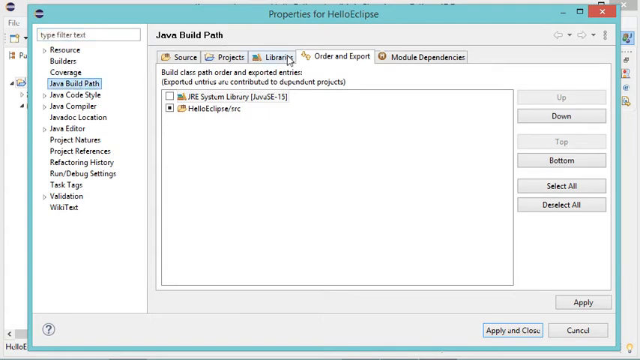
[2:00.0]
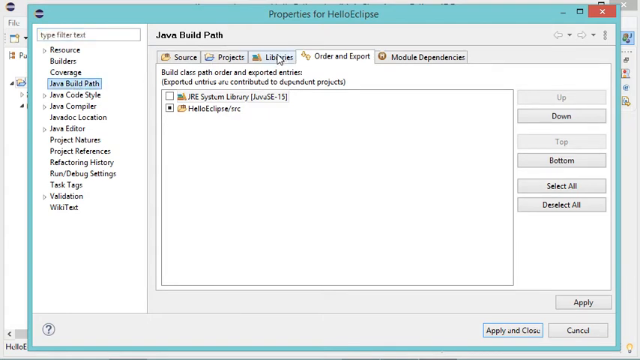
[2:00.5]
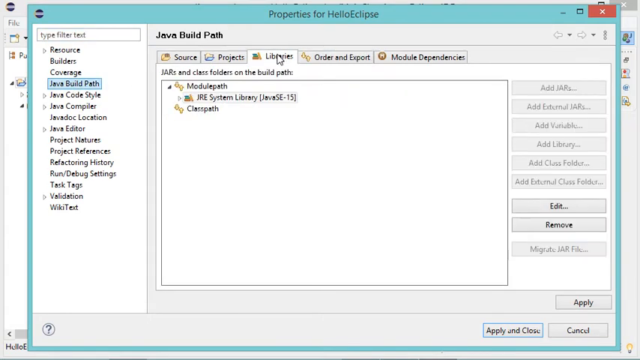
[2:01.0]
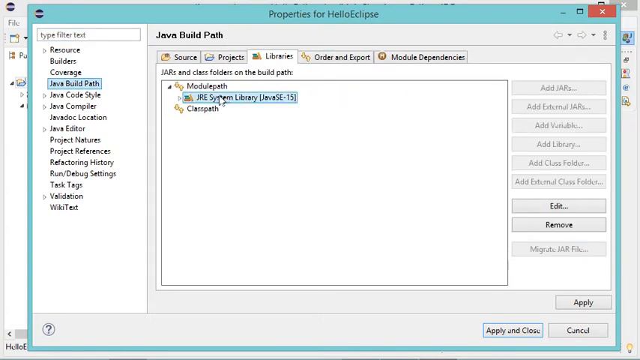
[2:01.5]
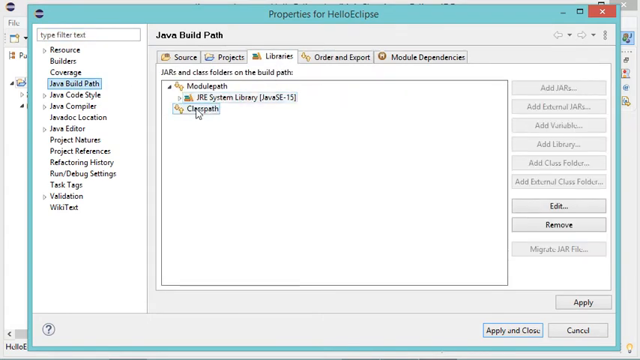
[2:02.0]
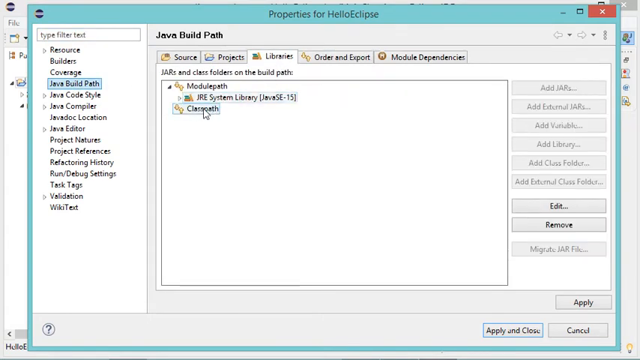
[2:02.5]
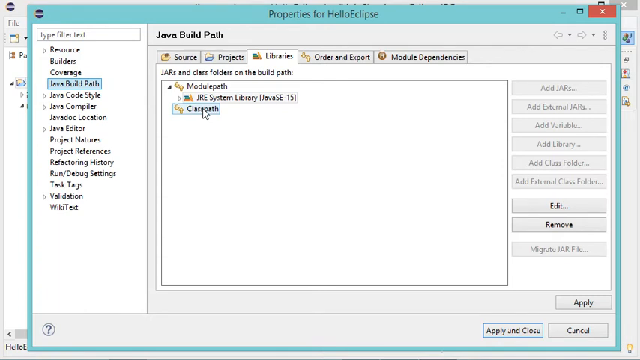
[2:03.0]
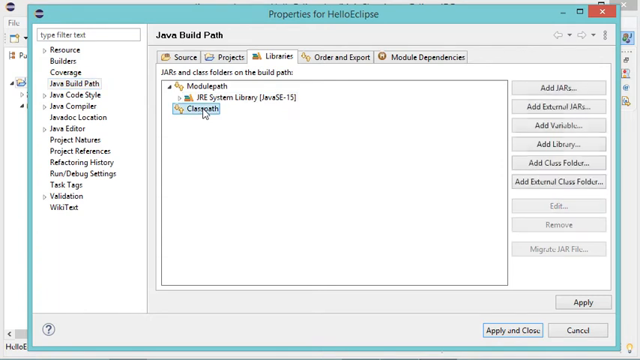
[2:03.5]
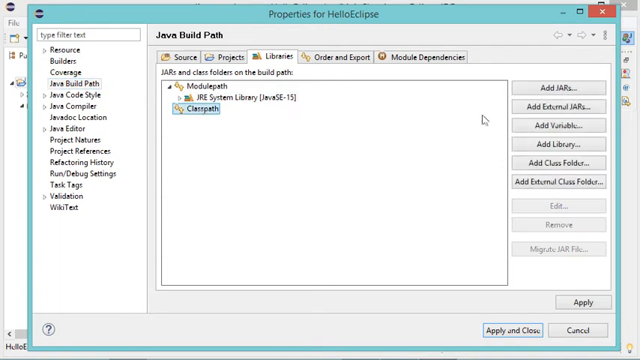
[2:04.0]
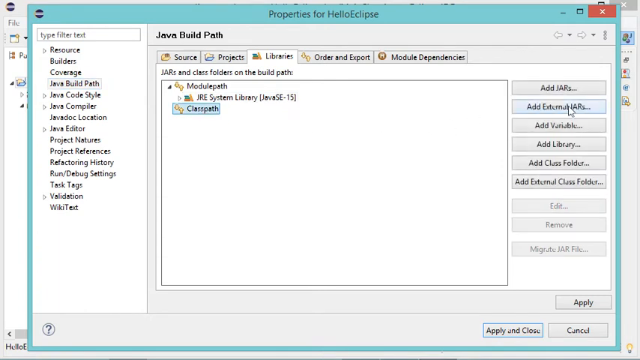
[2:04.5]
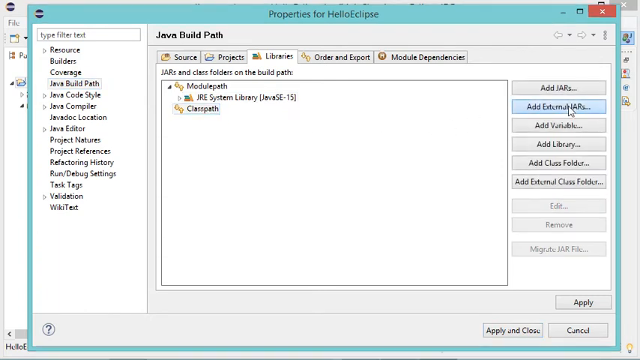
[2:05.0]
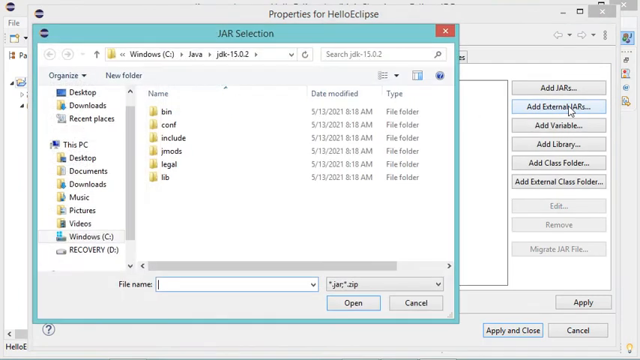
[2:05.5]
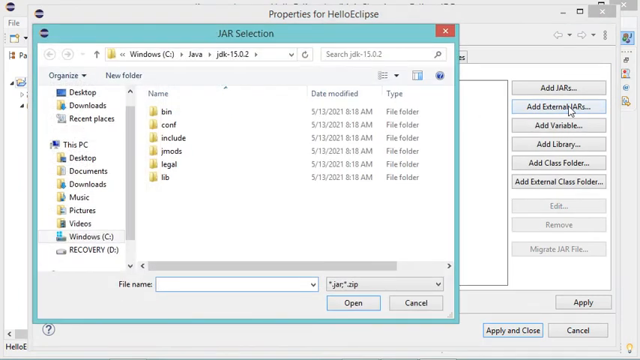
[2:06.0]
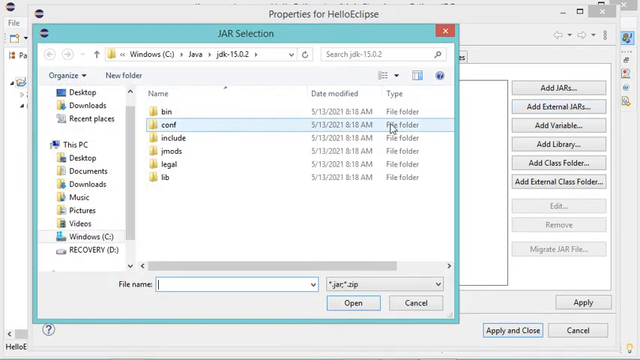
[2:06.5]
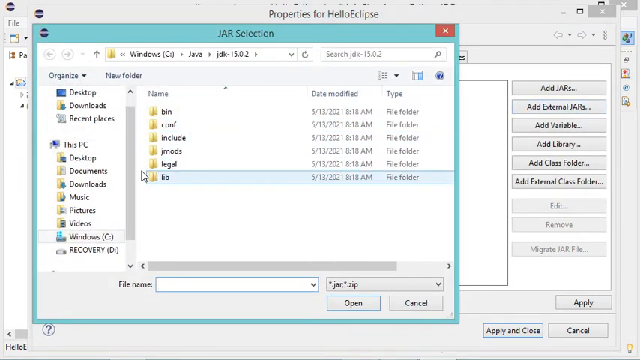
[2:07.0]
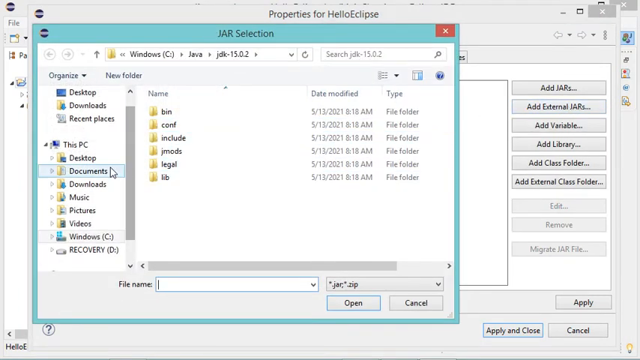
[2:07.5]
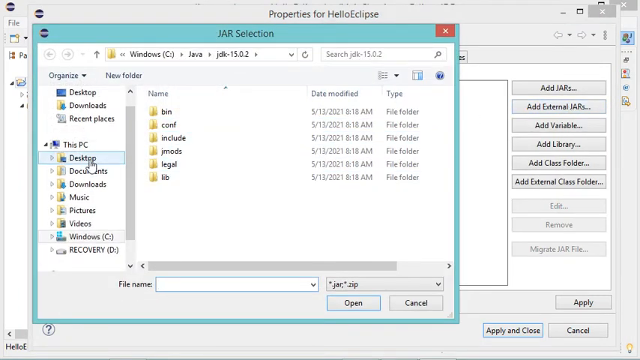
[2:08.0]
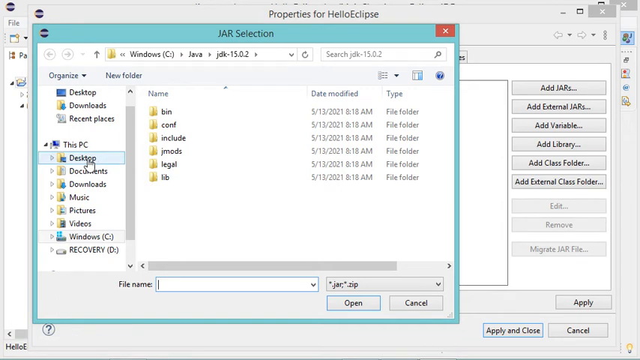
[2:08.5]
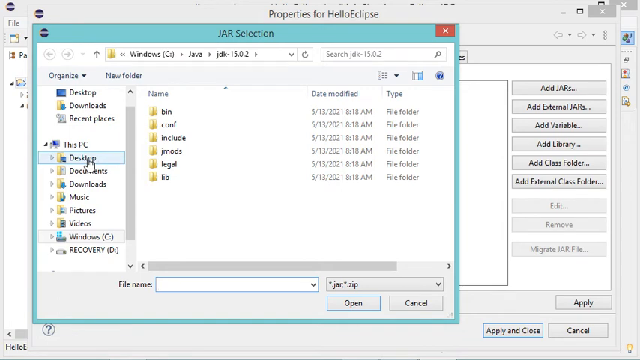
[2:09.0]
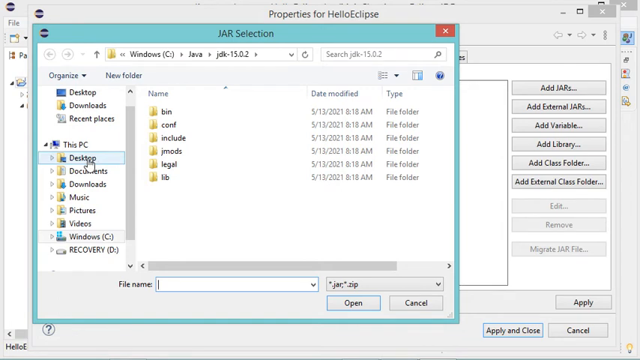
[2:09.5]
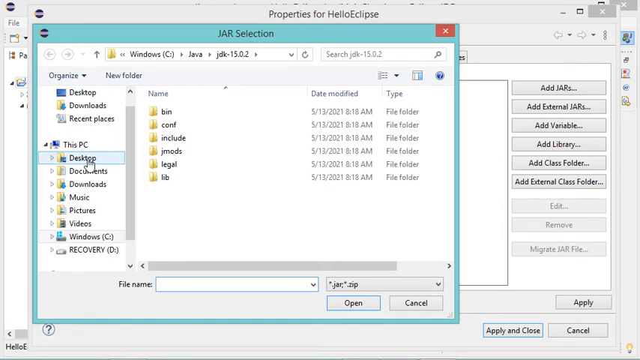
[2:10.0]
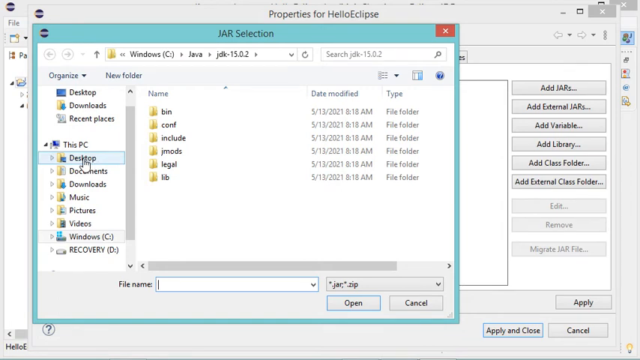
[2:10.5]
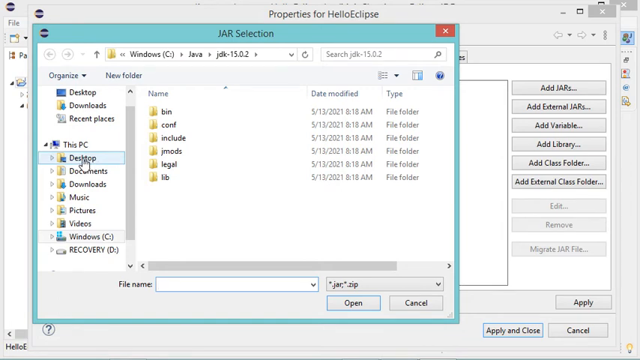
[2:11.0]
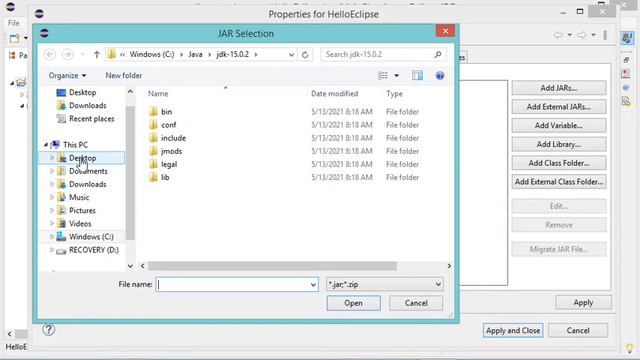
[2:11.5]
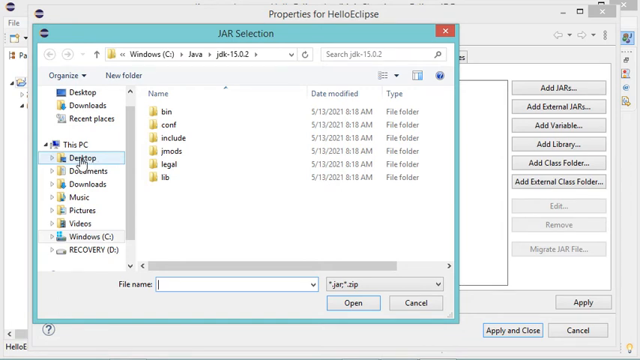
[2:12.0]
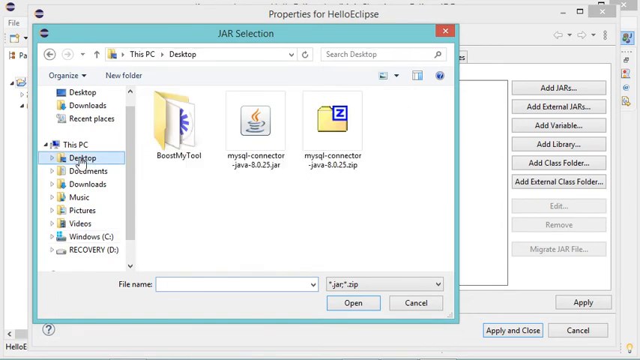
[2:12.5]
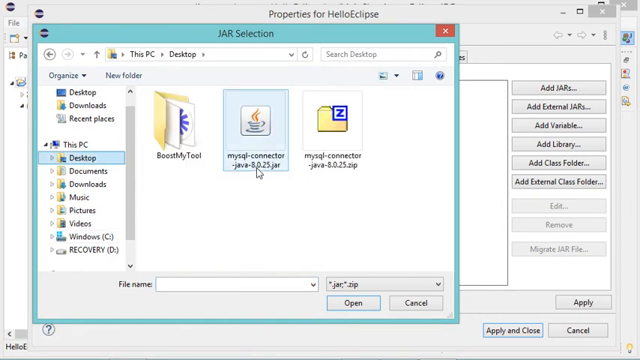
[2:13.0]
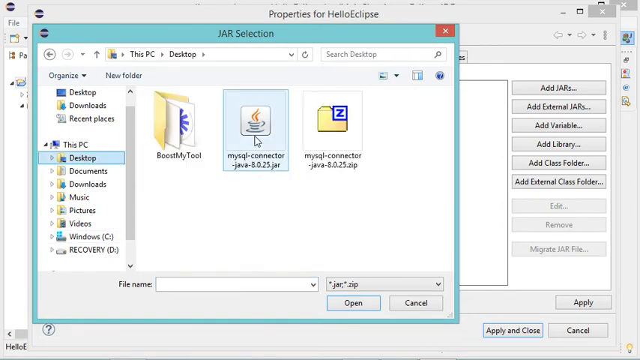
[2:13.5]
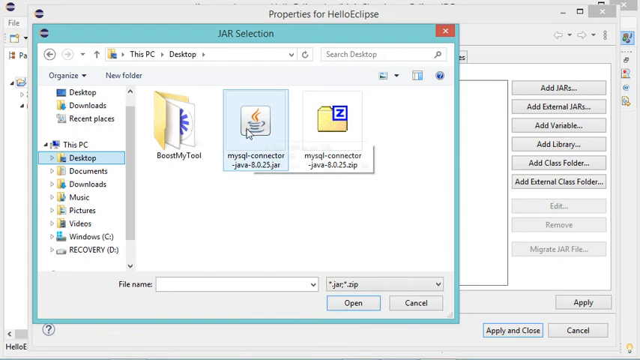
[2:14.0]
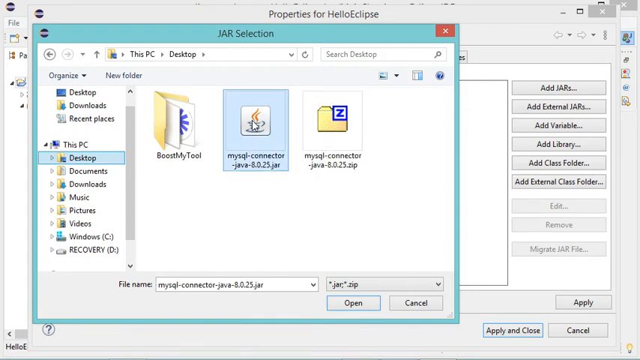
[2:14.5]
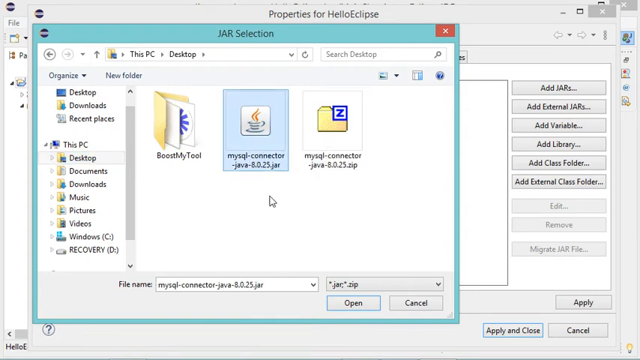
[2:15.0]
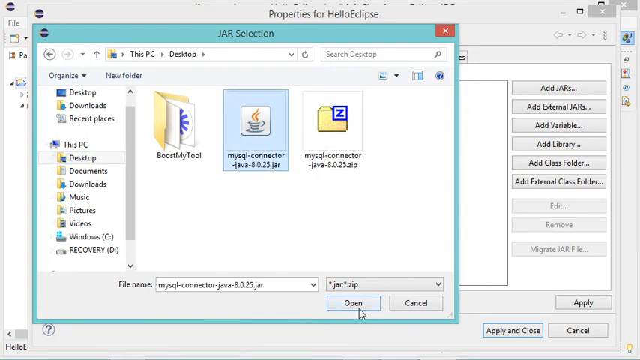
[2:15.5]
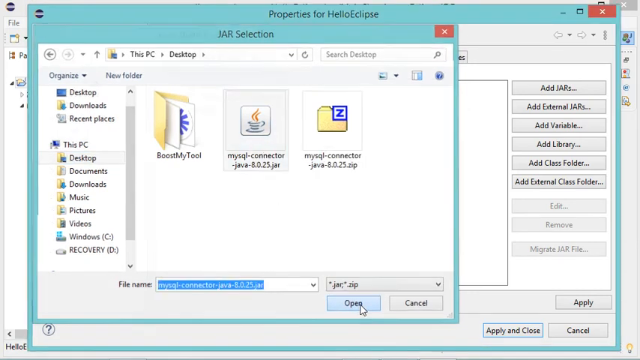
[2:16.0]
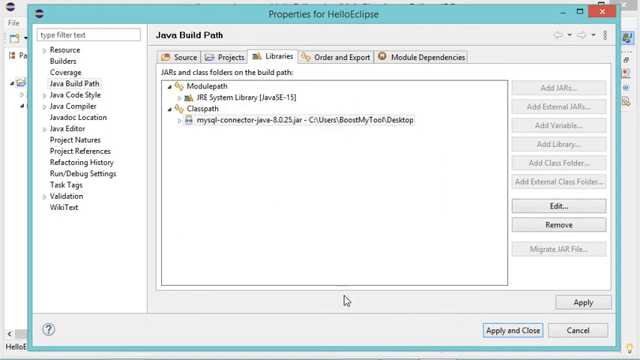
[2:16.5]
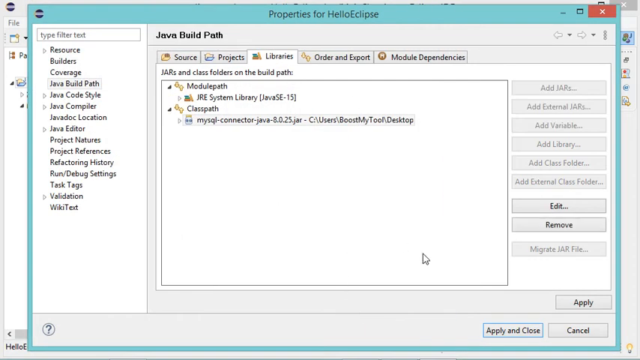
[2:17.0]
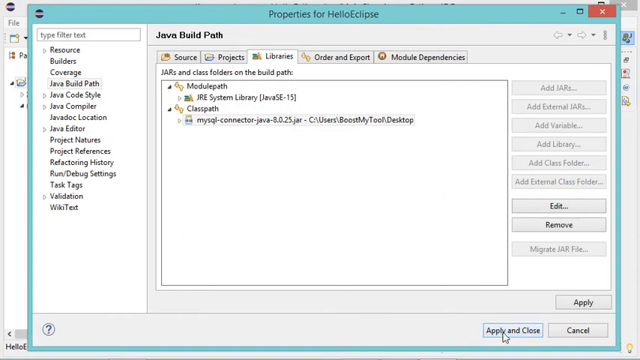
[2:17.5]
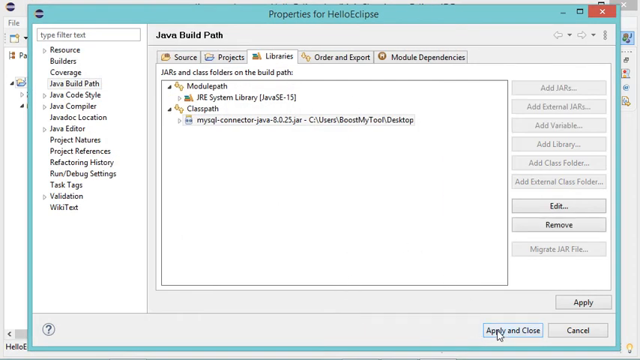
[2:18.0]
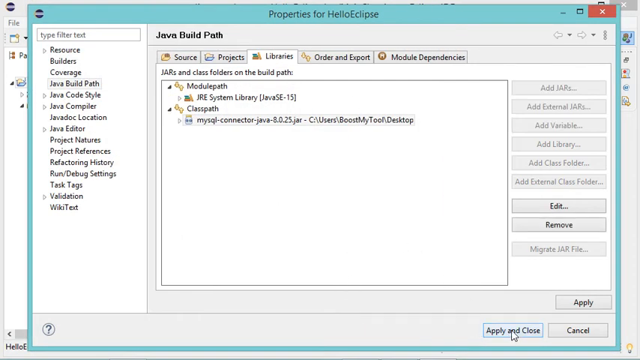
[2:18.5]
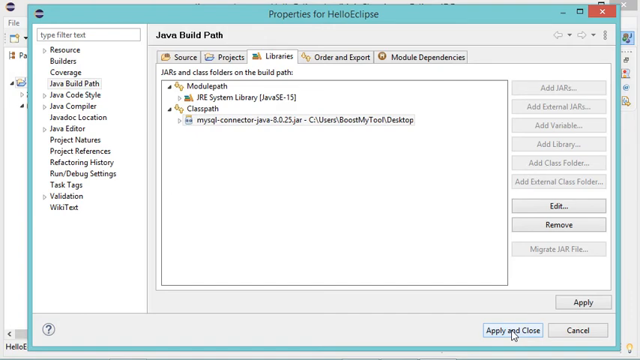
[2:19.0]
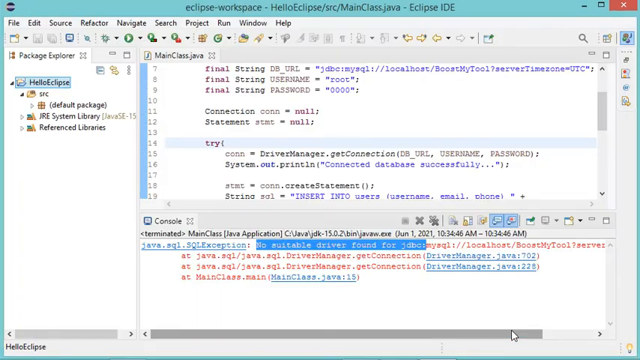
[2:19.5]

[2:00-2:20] The properties for Hello Eclipse are open on the Java build path, with source, projects, libraries, order and export, and module dependencies. The text "build class path order and exported entries" and "Exported entries are contributed to dependent projects" is visible, along with JRE system library, Hello Eclipse and some other settings on the left side. Java build path is highlighted in blue. The user clicks on libraries, goes to class path and clicks it, then clicks add external jars. A jar selection screen pops up; the user goes to desktop, kind of hovers over it, and clicks it. They click MySQL connector and click Open, then go to apply and close and click it.